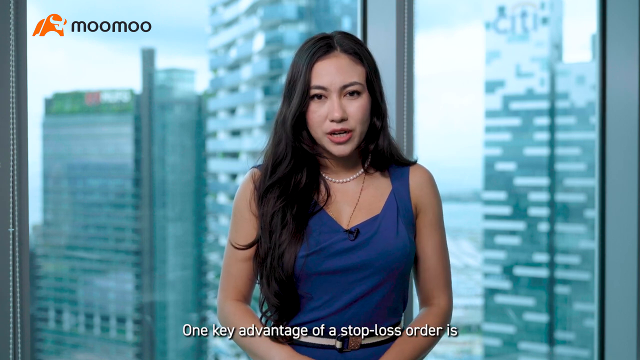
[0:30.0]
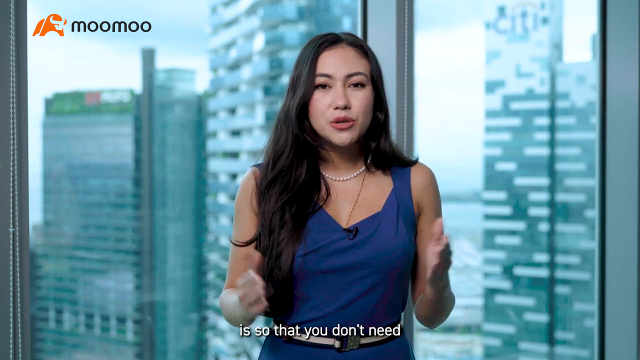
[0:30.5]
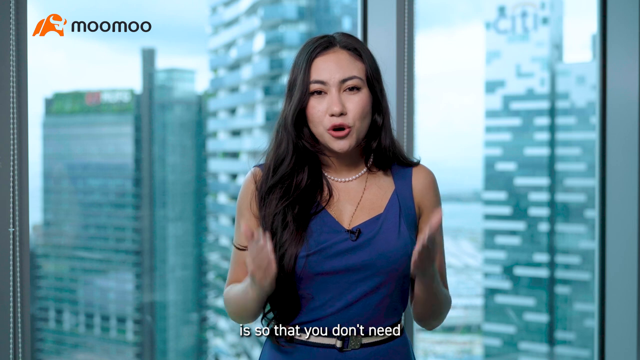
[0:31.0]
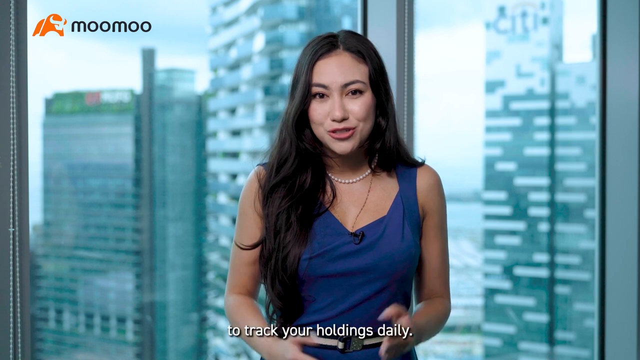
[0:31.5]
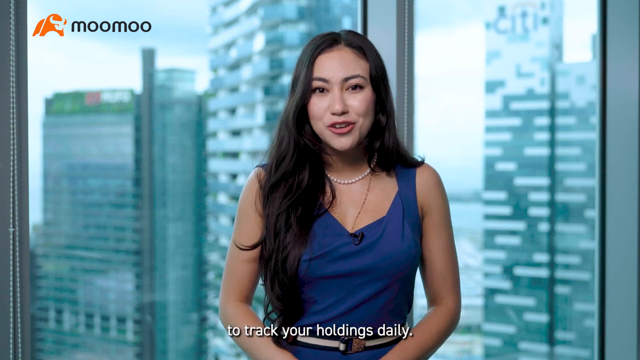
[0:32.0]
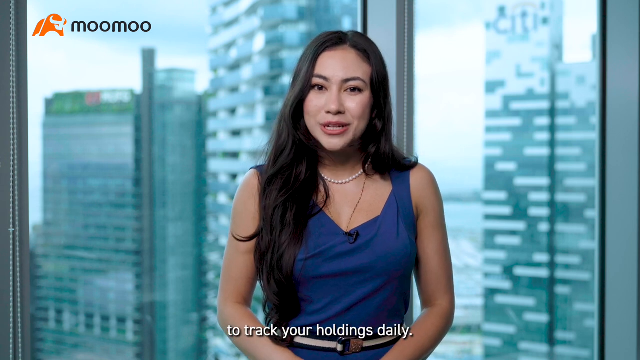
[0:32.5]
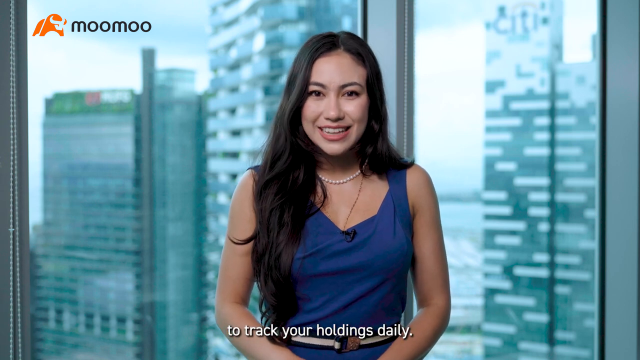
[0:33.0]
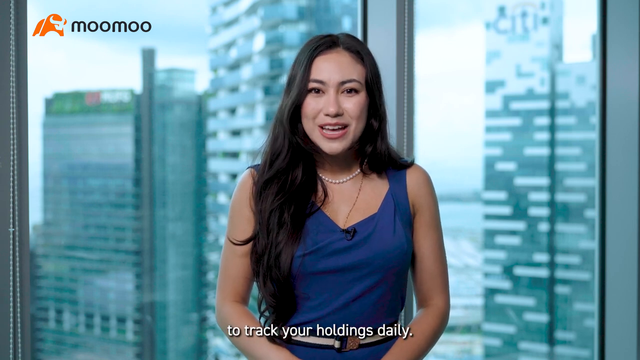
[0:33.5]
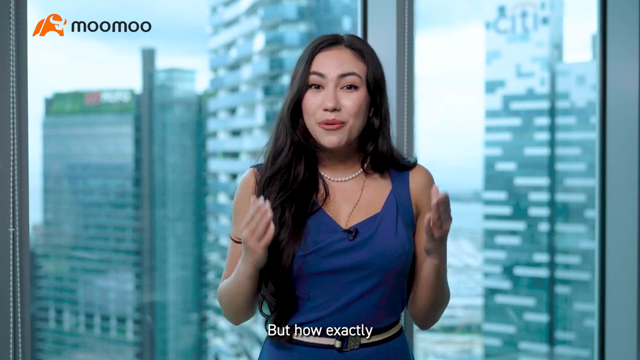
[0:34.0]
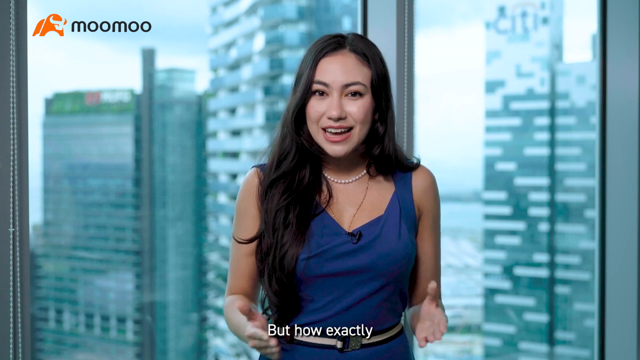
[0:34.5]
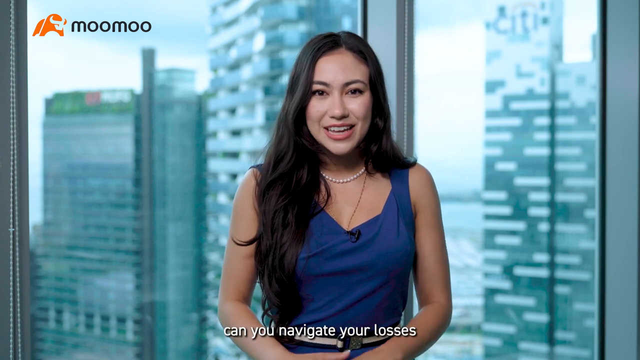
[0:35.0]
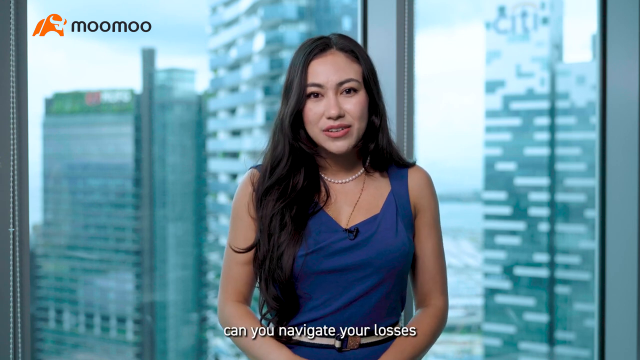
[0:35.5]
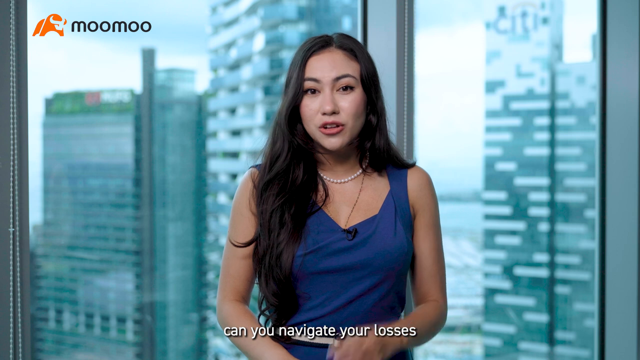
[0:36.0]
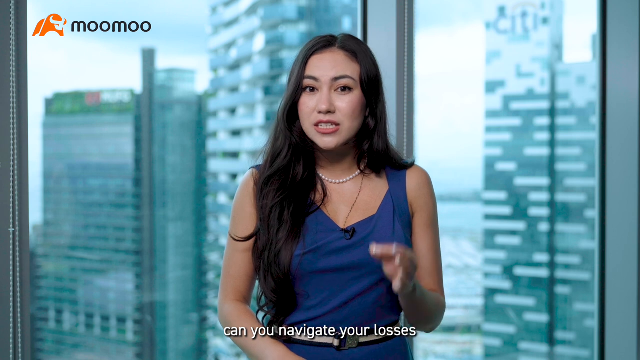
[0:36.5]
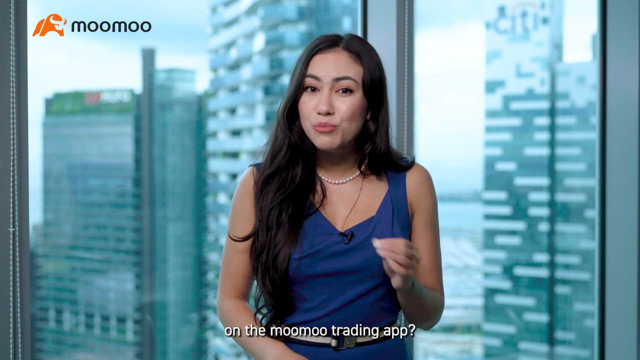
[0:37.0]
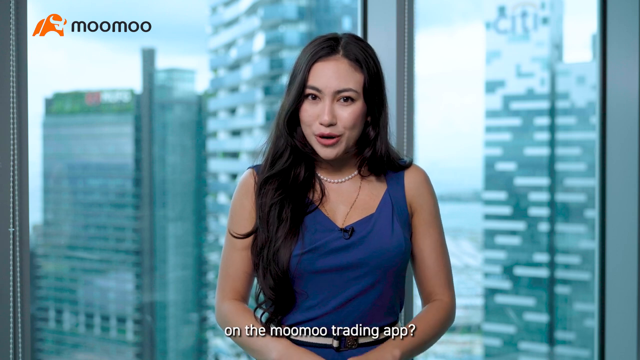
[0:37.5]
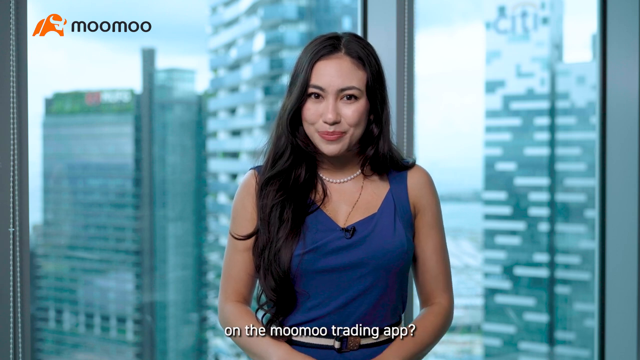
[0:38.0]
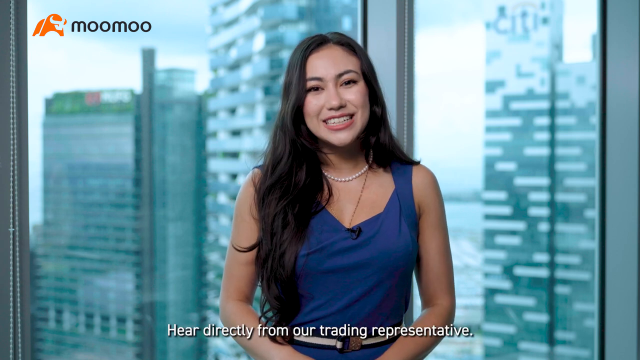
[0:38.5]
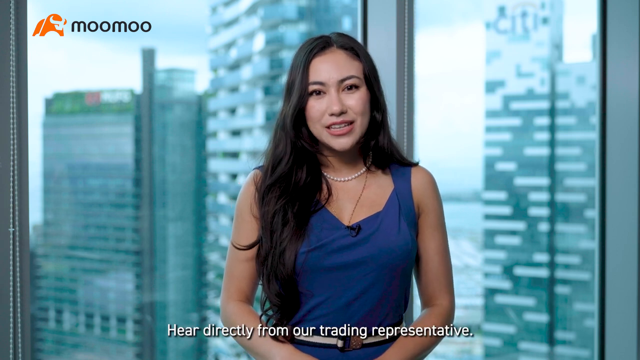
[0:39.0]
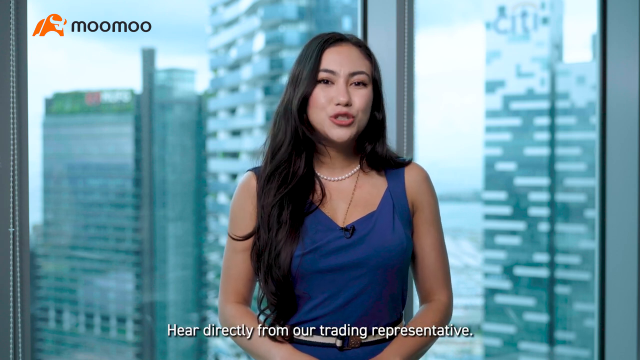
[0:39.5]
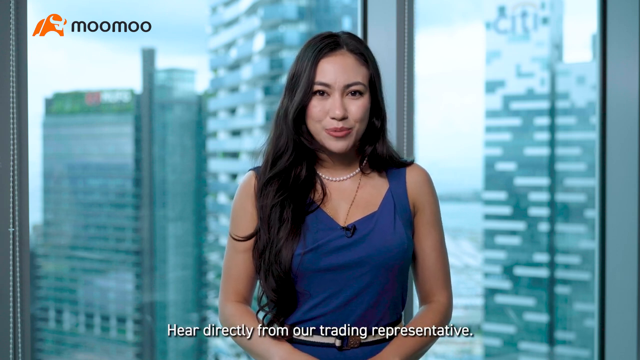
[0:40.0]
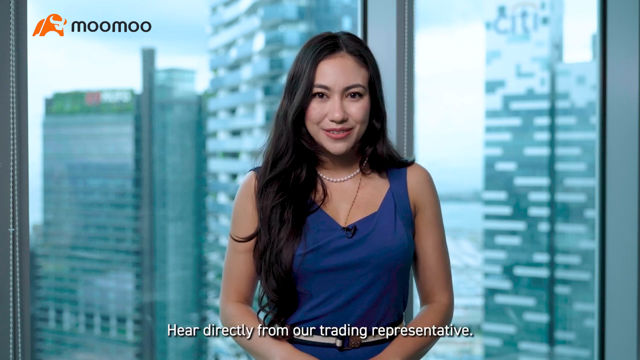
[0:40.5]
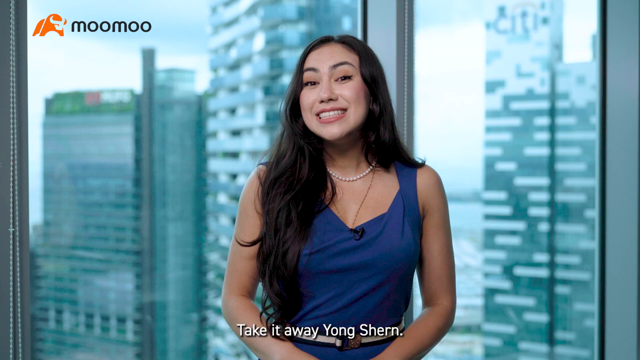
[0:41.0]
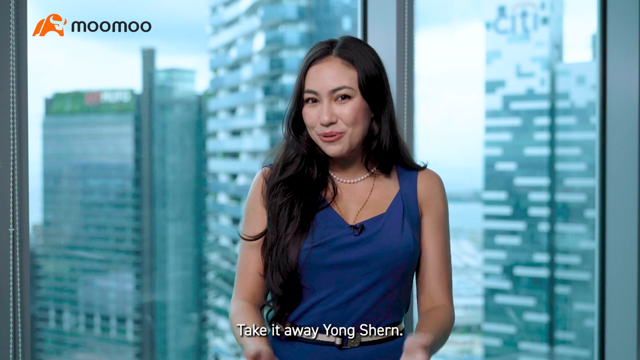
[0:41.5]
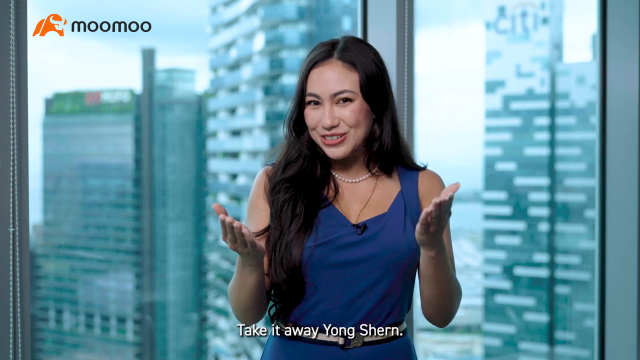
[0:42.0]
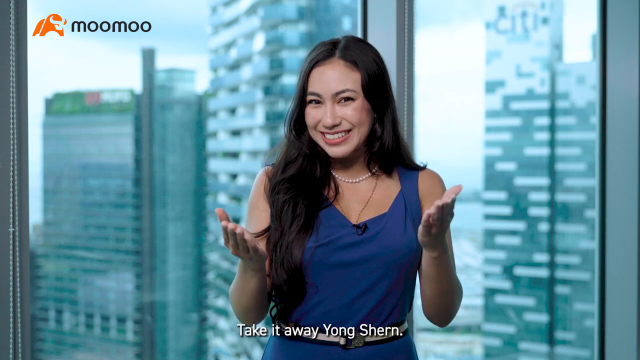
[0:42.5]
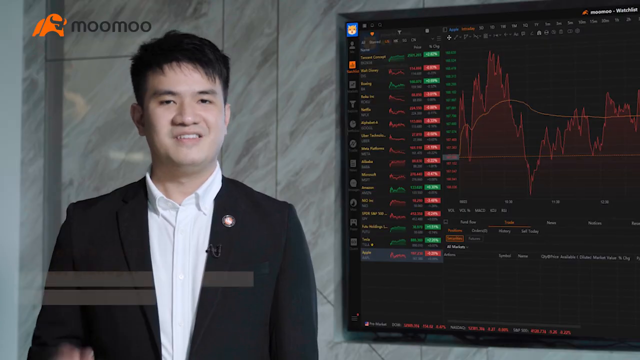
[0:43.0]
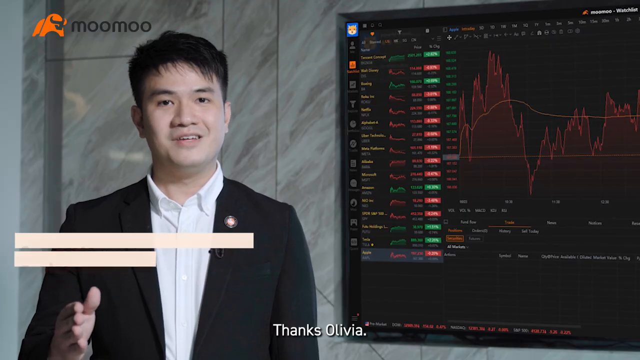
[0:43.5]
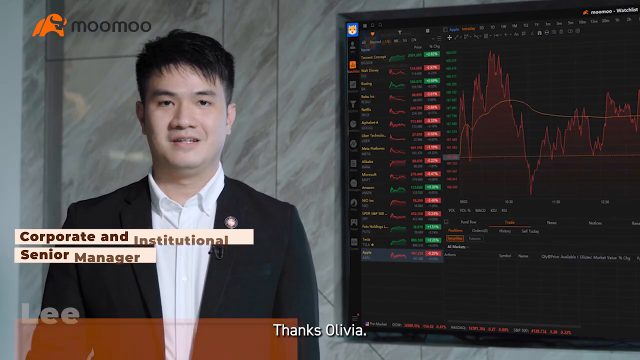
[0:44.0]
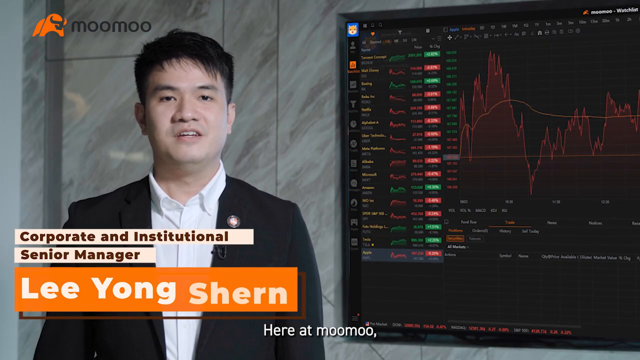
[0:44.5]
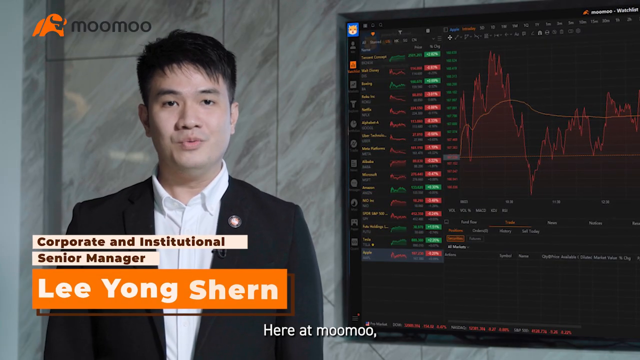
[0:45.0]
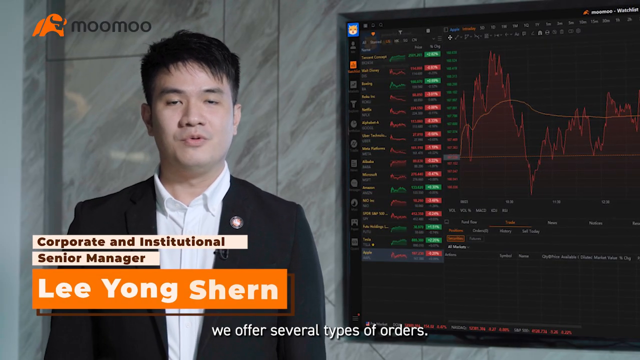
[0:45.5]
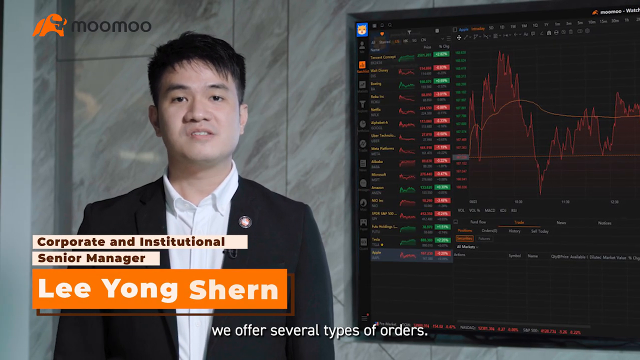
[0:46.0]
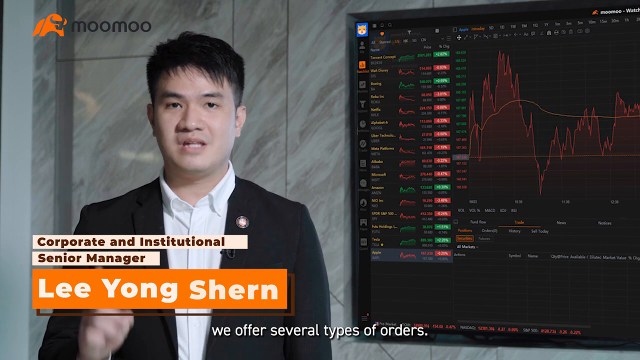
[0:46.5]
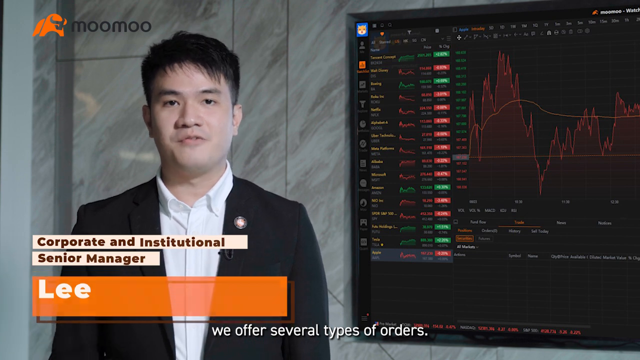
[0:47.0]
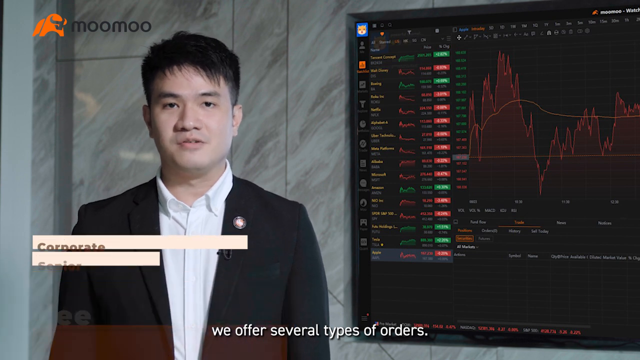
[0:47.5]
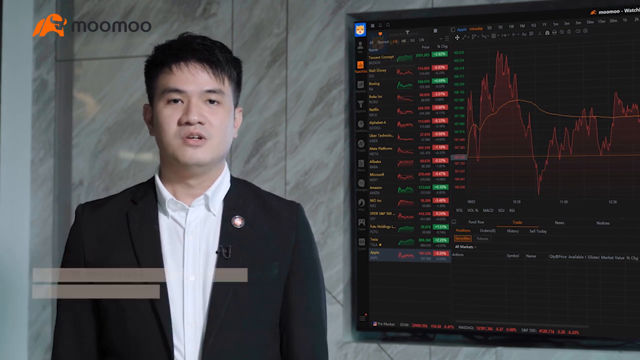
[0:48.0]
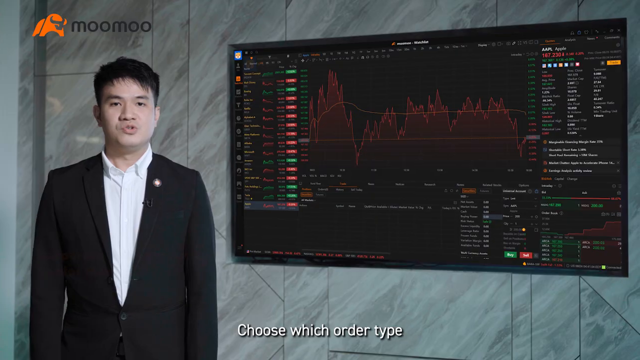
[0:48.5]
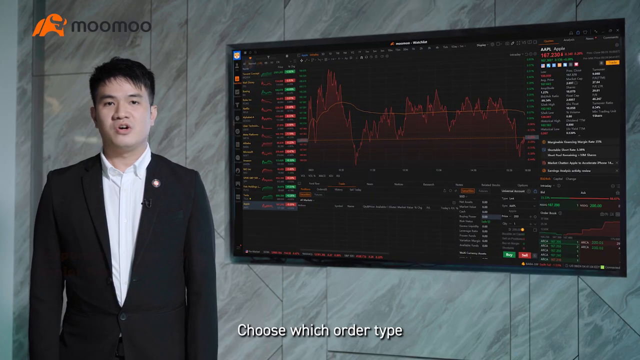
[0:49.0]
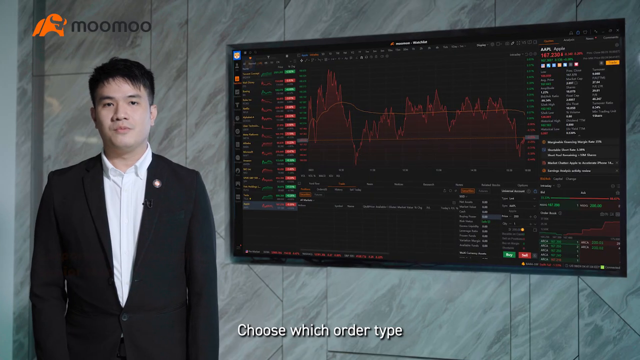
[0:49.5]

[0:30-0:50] Olivia is talking again, apparently about the MooMoo trading app, and she says, "Can you navigate the app?" An expert on the app, Lee Yong Shern, then takes over; on-screen text above his name identifies him as the Corporate and Institutional Senior Manager. To his left is a screen that appears to present various trader information; it looks like a television showing different stocks and charts of a particular stock, including a red bar graph. Lee Yong wears a white dress shirt with a pin at its top left and a black suit coat, and he appears to be showing how the app works.